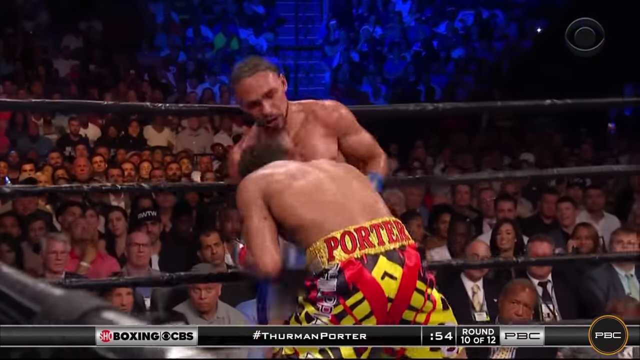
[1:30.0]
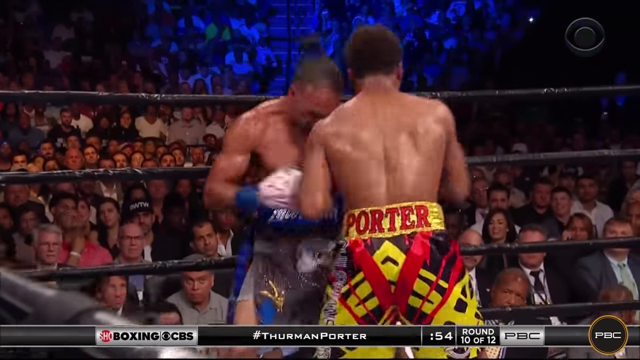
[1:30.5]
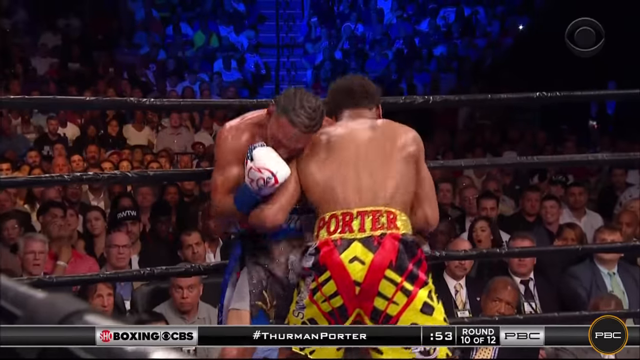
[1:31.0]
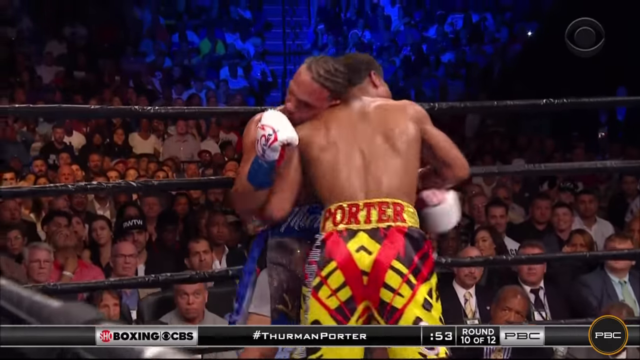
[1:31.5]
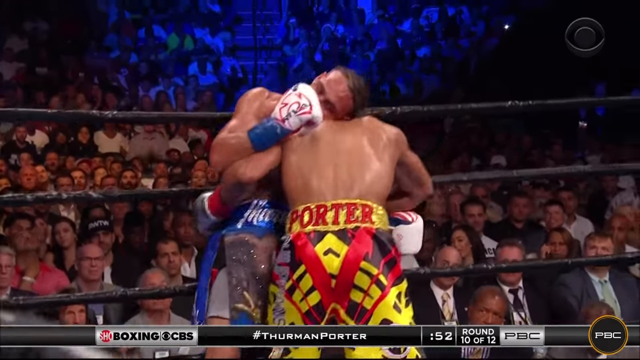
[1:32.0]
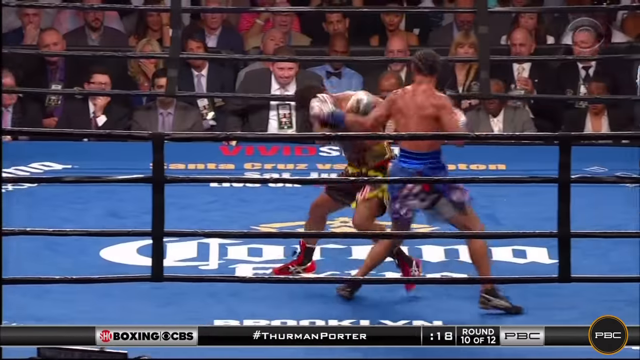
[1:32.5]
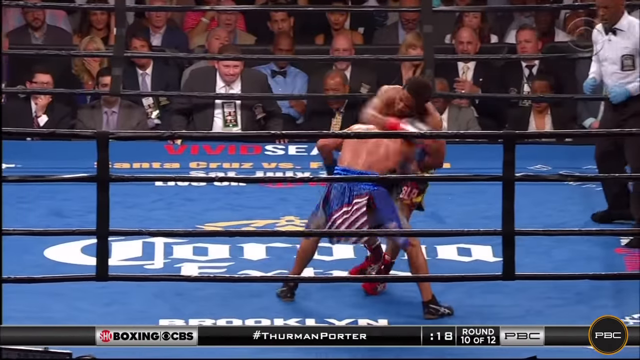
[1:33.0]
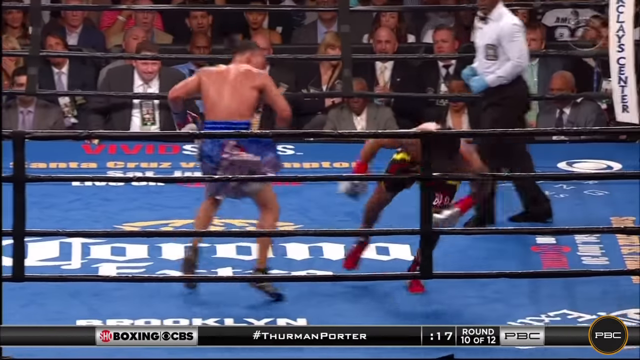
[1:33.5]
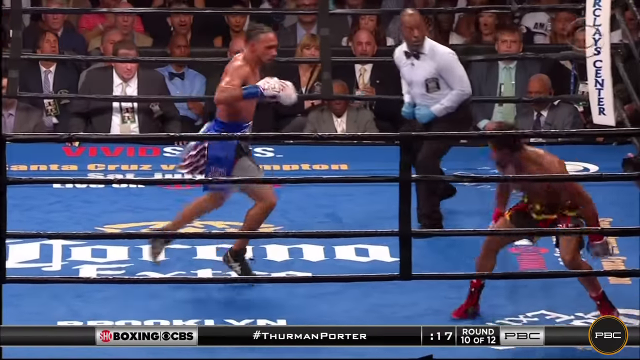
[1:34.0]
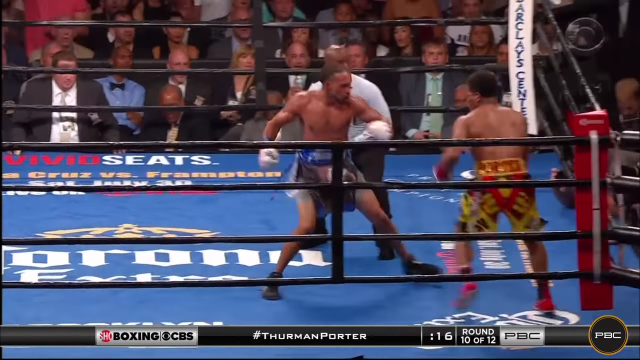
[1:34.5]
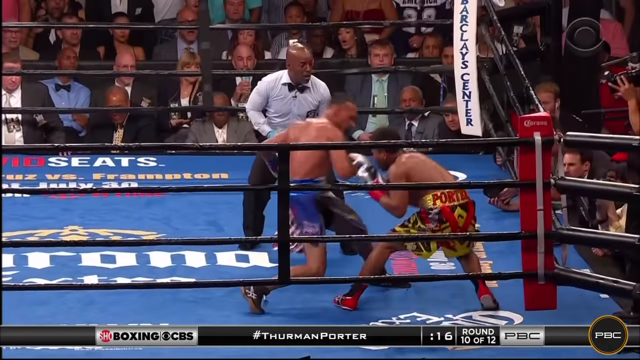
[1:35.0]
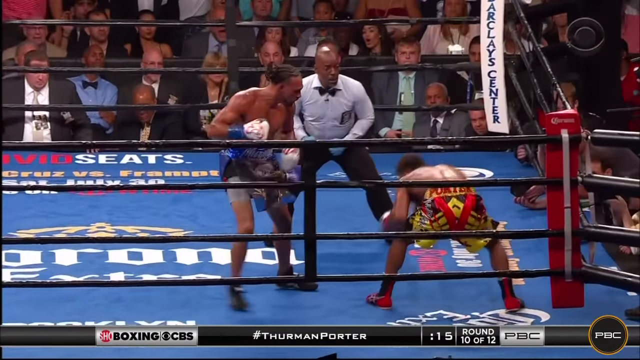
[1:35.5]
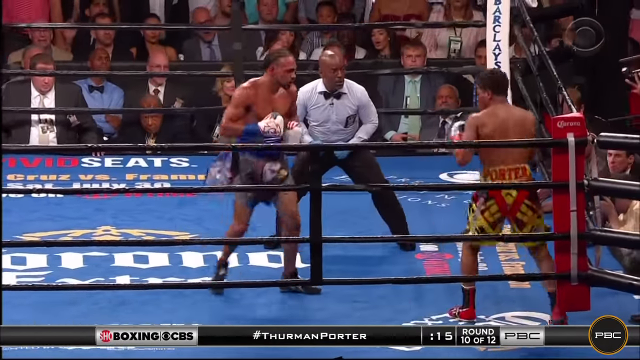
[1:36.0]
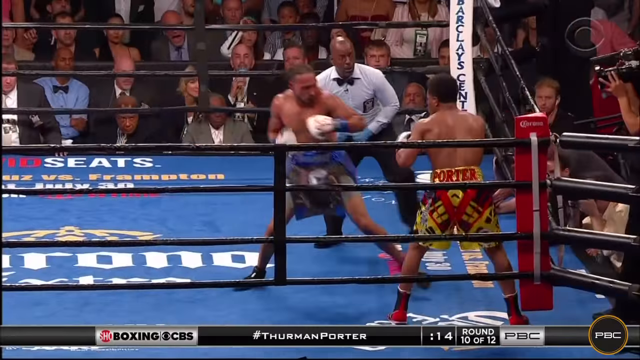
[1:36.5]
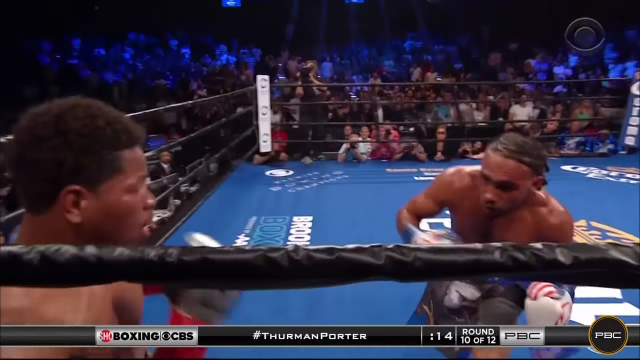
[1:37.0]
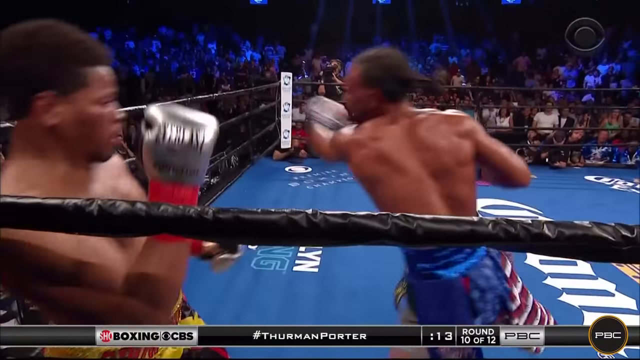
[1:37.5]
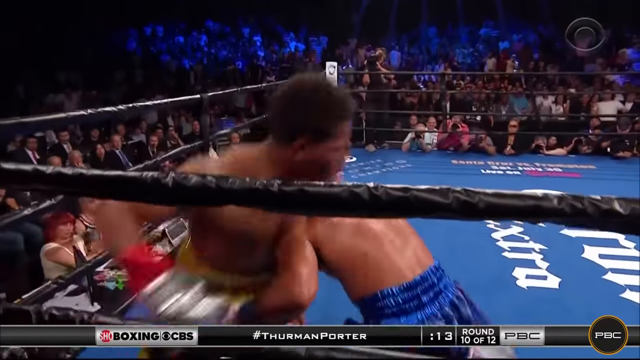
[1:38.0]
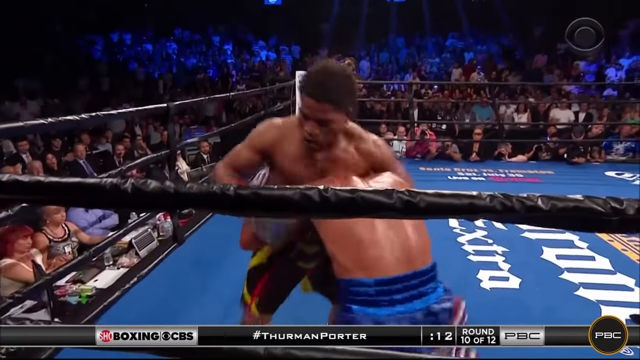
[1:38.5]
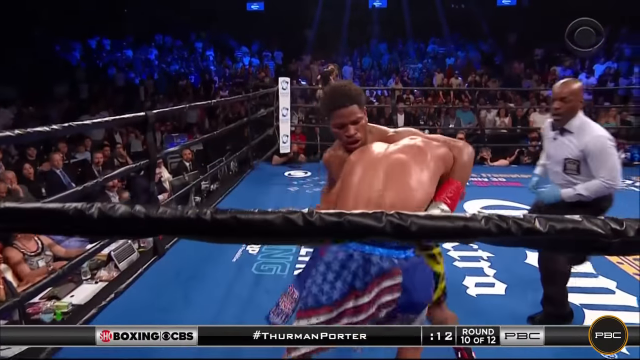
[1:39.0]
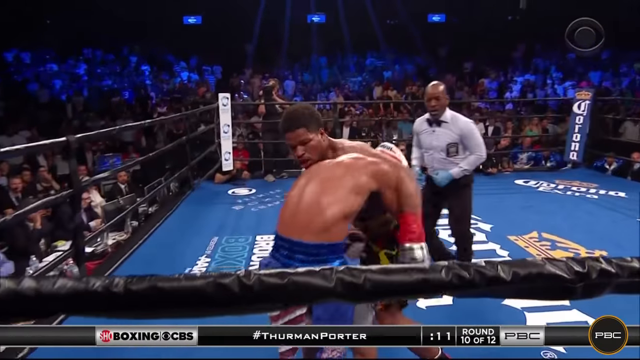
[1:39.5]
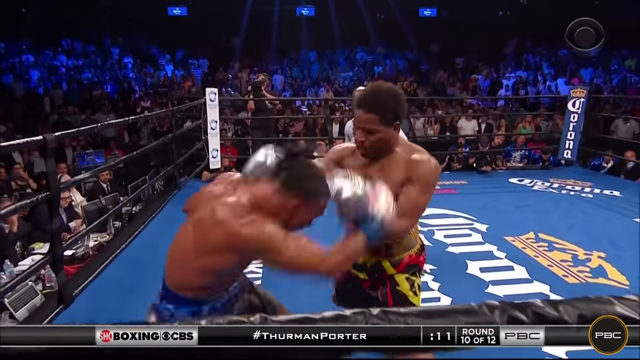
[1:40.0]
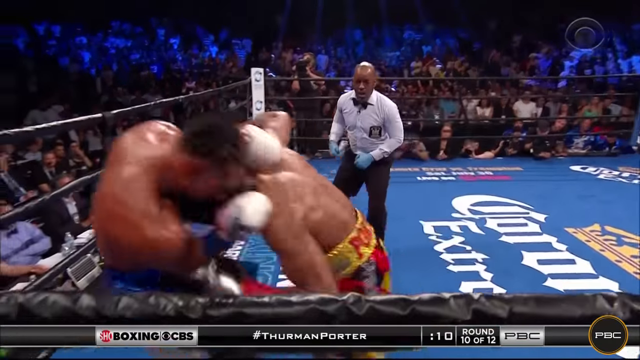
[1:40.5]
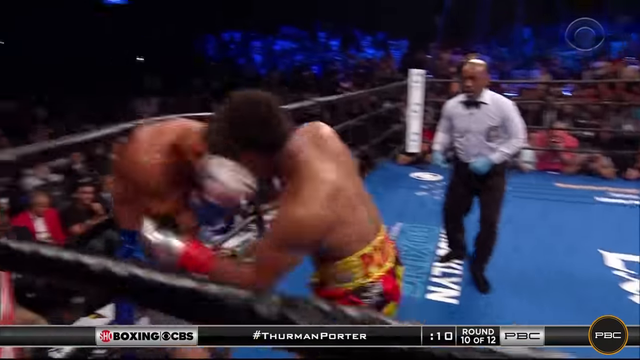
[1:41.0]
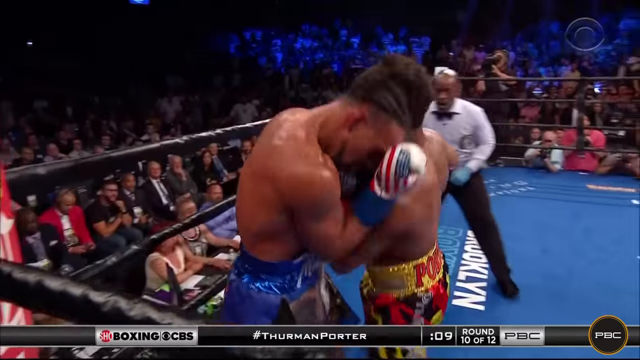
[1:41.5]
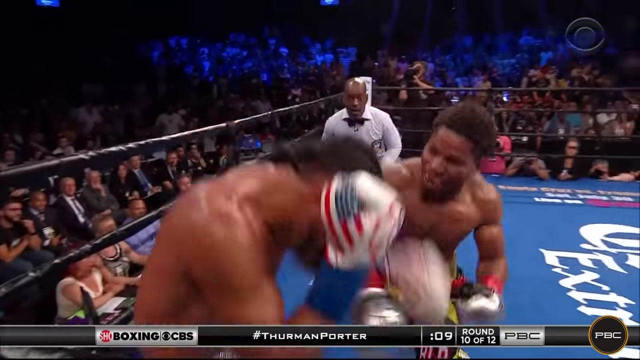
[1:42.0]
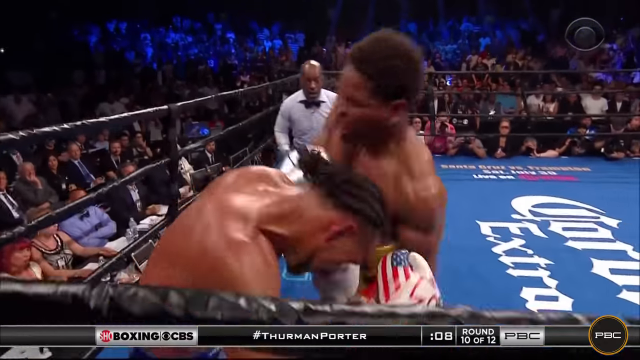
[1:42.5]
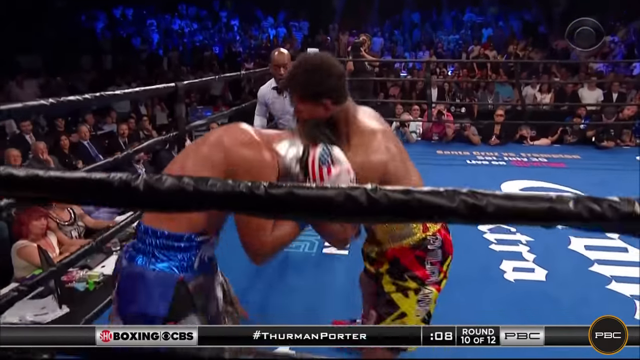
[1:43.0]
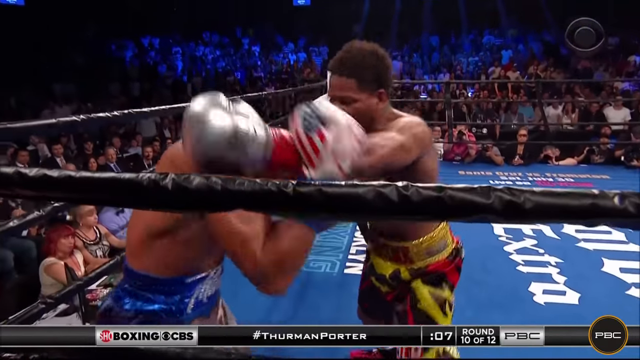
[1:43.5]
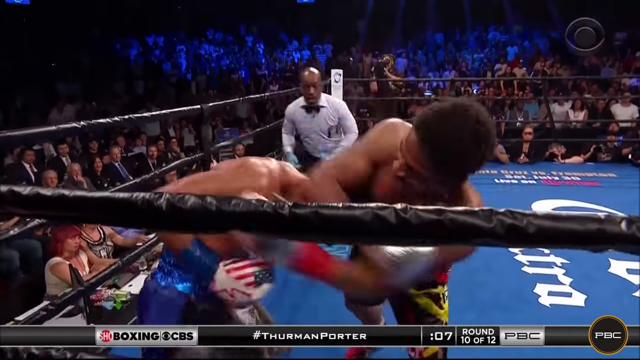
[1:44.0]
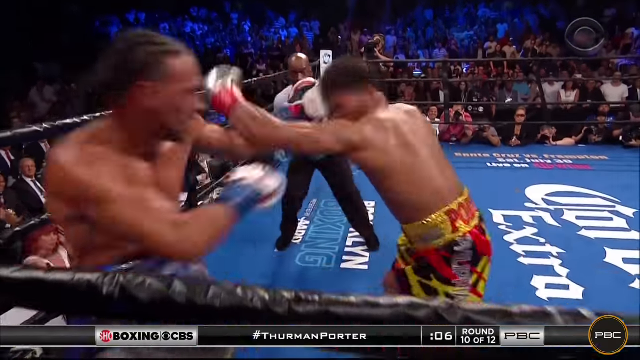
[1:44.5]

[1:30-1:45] In a close-up view, Porter catches the boxer in blue shorts, Thurman, on the face with a left-handed punch while Thurman is leaned up against the ropes. After a jump cut to a farther view, they stumble against one another, and the boxer in black shorts, Porter, ends up against the corner while the boxer in blue shorts takes position to hit him with large punches. A cut goes to a closer view from right next to the corner as they get tangled up: the boxer in blue shorts leans in and tries to press his head against the chest of the boxer in black and yellow shorts. As the boxer in blue shorts throws a wild right punch, the boxer in yellow and black shorts spins around him and forces him into the corner instead.